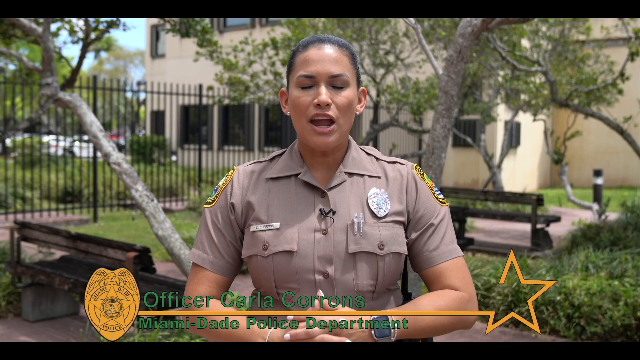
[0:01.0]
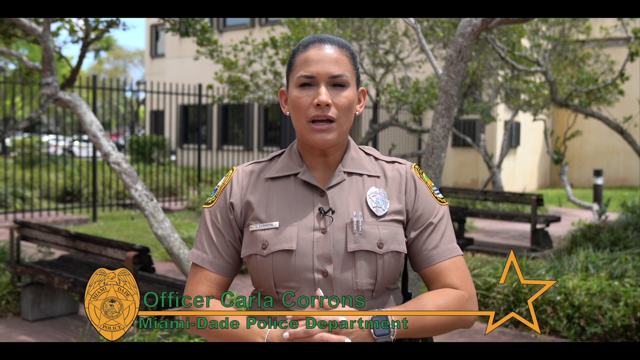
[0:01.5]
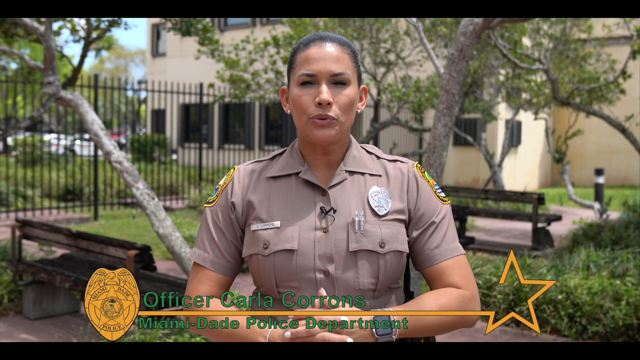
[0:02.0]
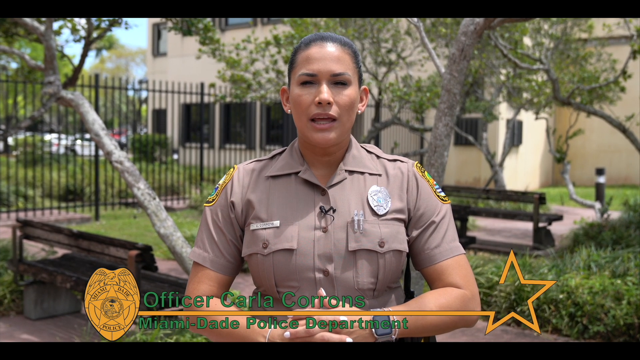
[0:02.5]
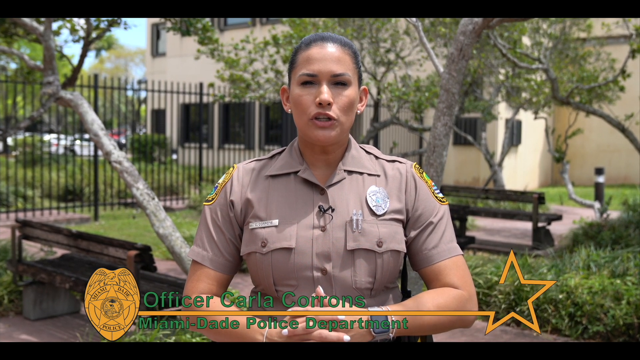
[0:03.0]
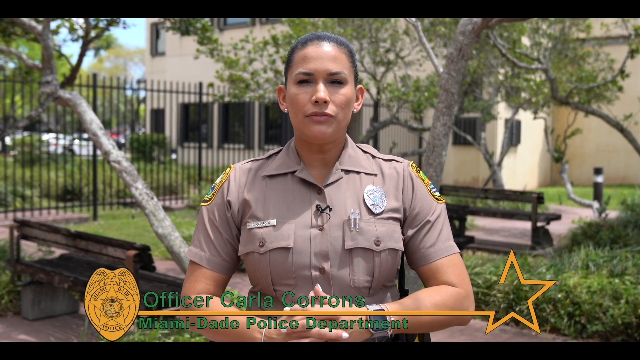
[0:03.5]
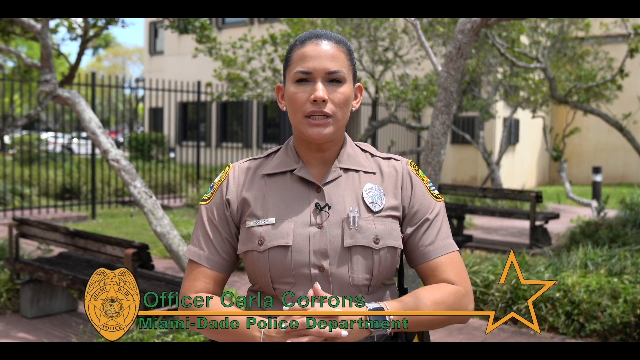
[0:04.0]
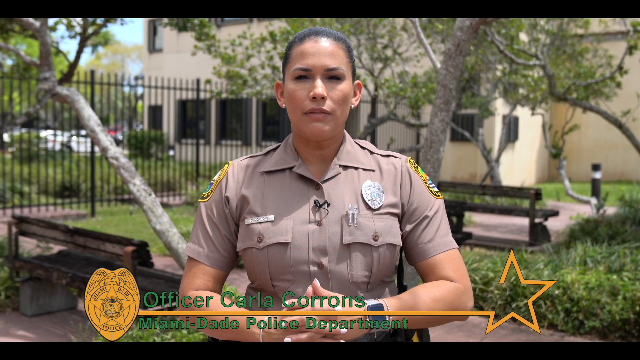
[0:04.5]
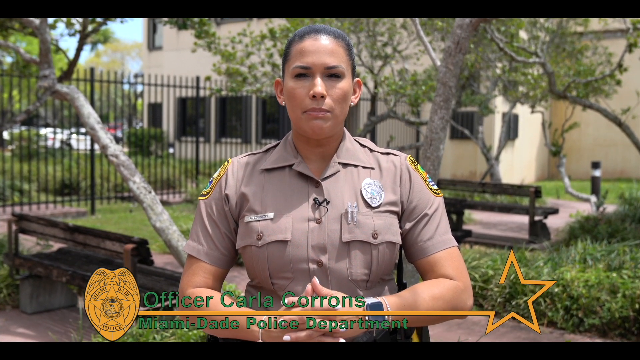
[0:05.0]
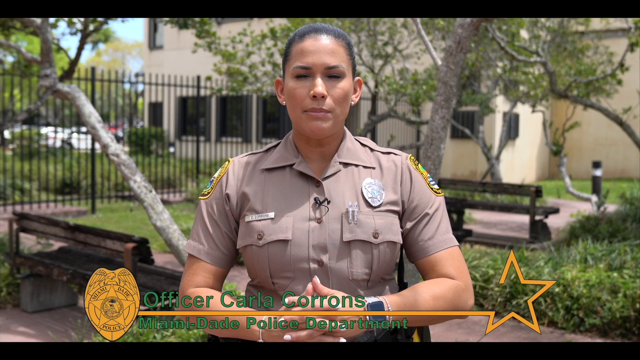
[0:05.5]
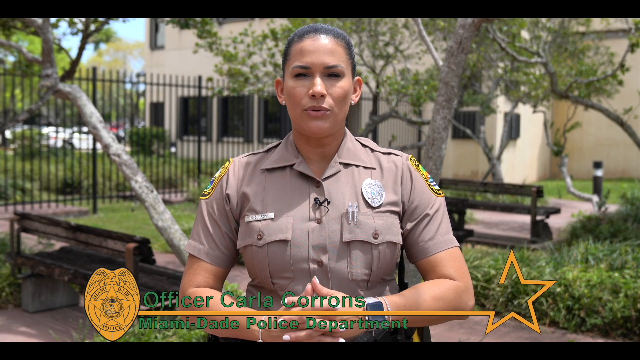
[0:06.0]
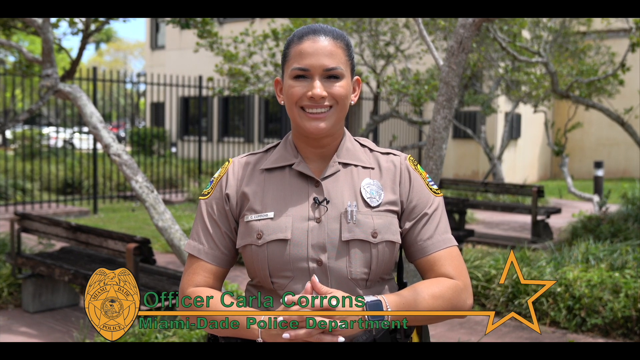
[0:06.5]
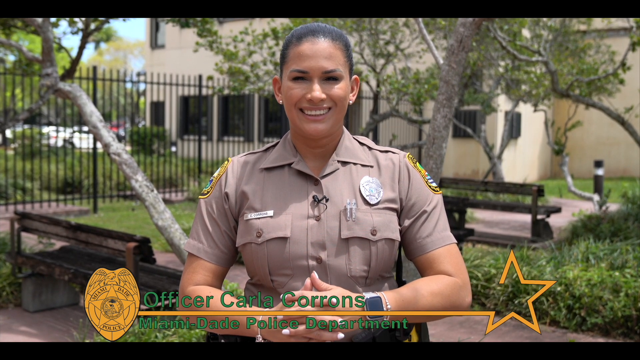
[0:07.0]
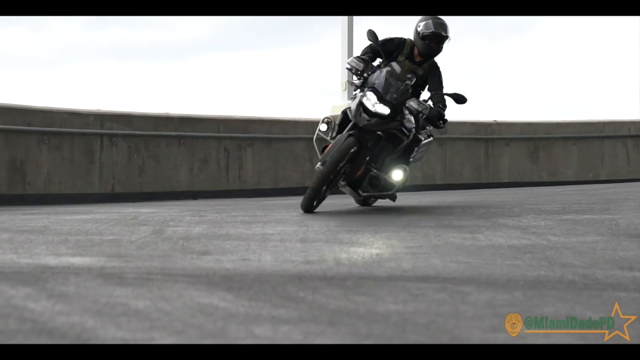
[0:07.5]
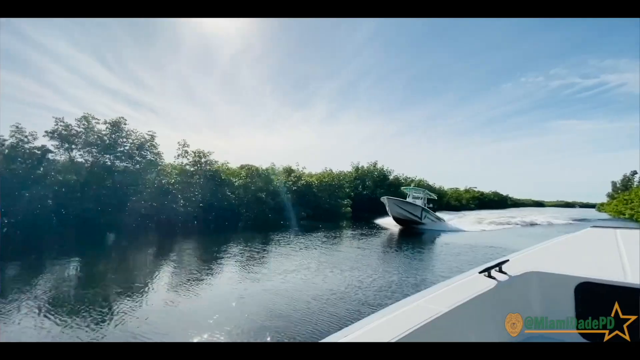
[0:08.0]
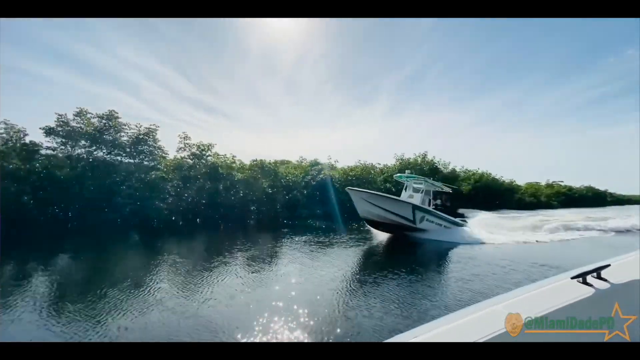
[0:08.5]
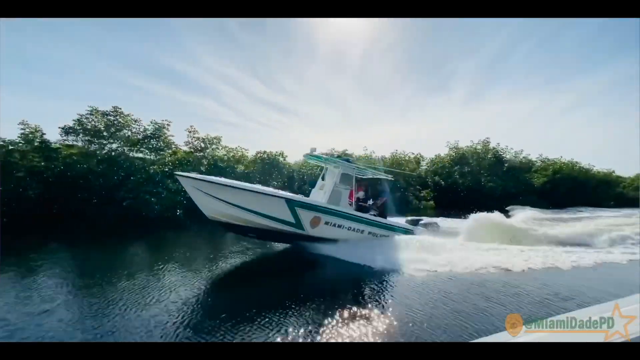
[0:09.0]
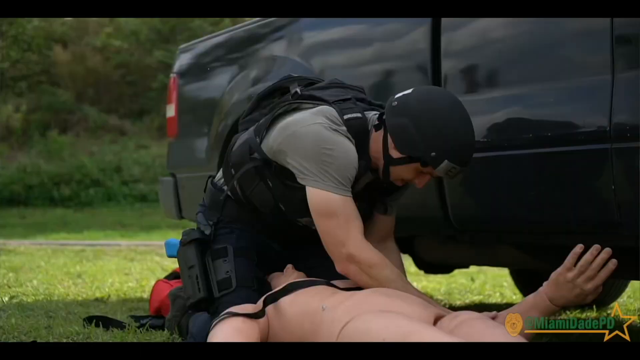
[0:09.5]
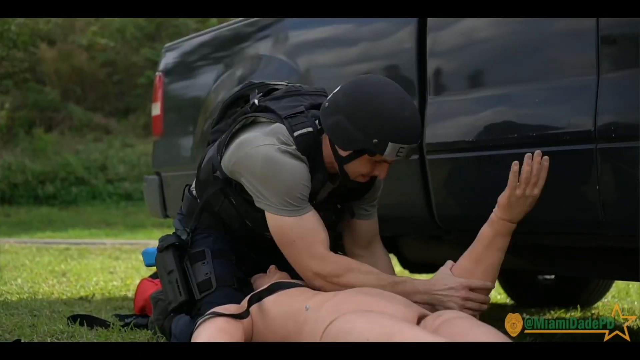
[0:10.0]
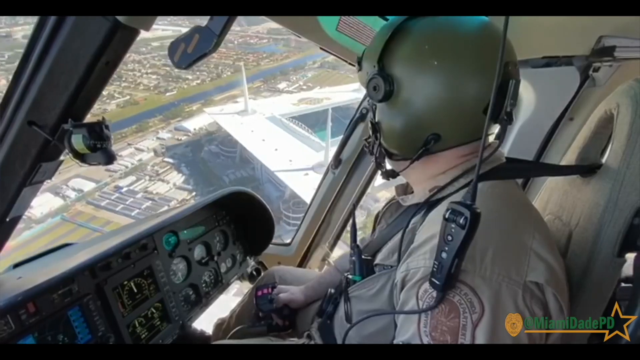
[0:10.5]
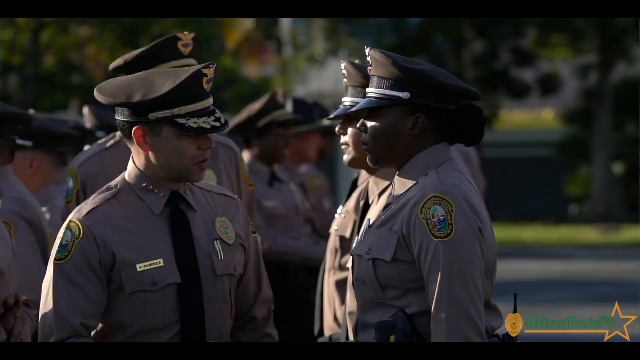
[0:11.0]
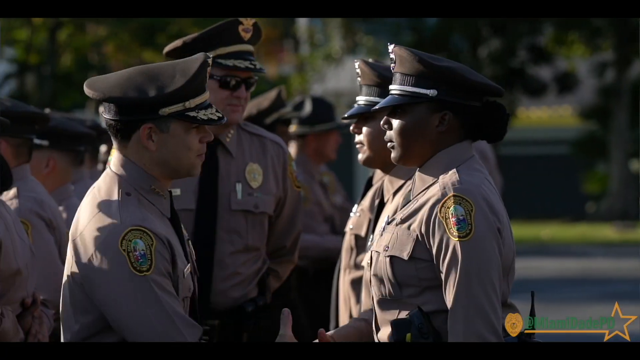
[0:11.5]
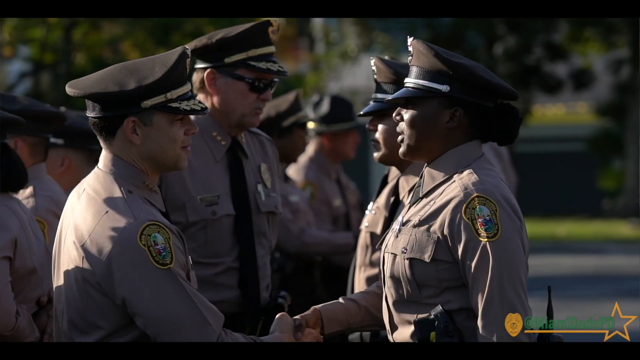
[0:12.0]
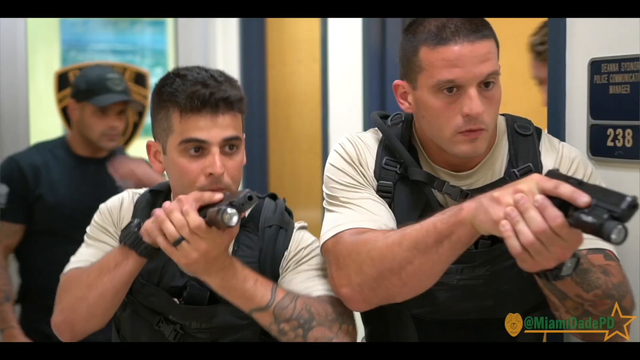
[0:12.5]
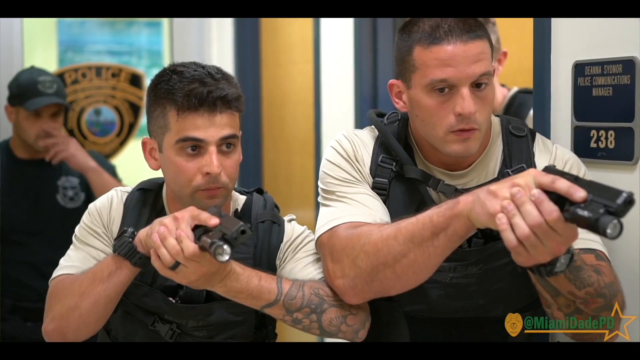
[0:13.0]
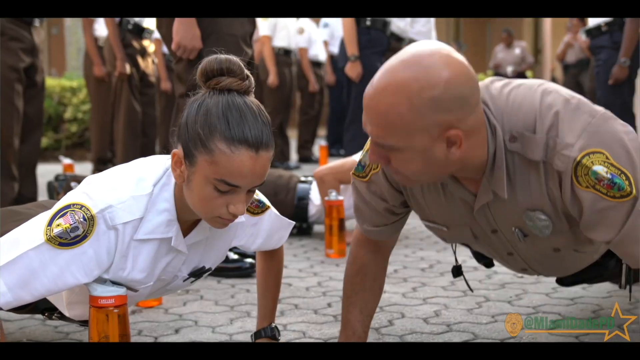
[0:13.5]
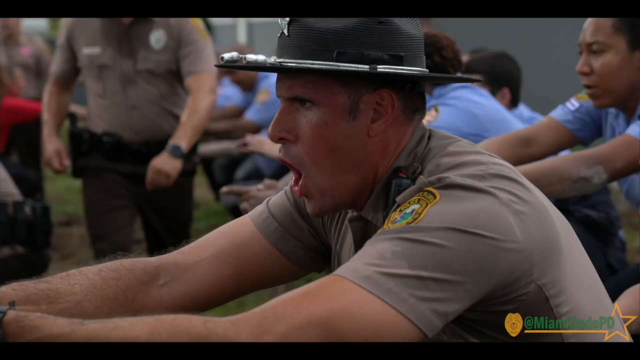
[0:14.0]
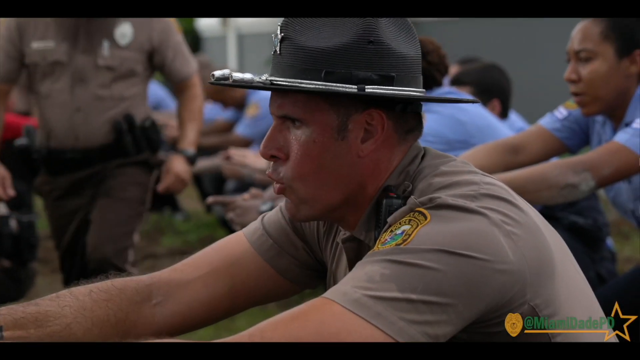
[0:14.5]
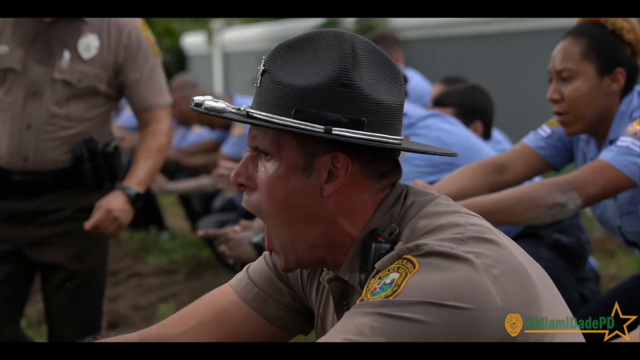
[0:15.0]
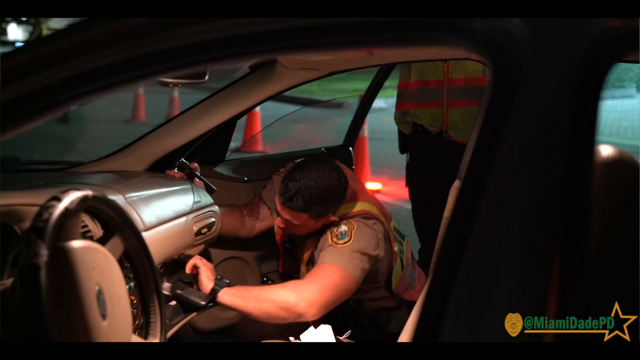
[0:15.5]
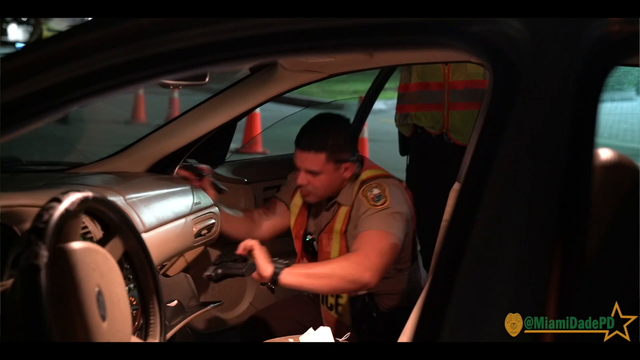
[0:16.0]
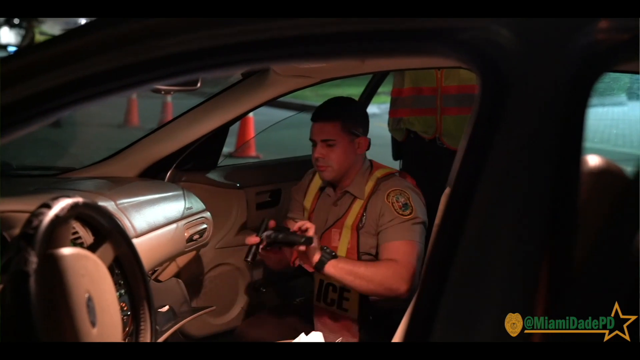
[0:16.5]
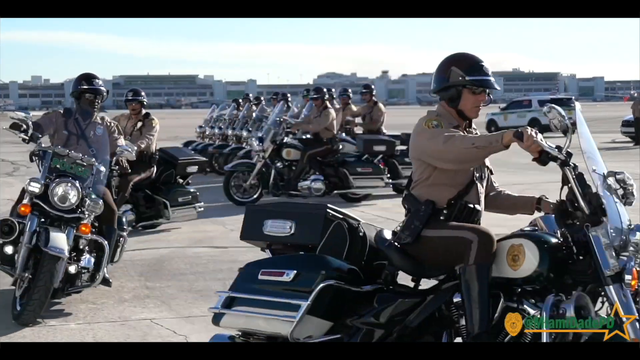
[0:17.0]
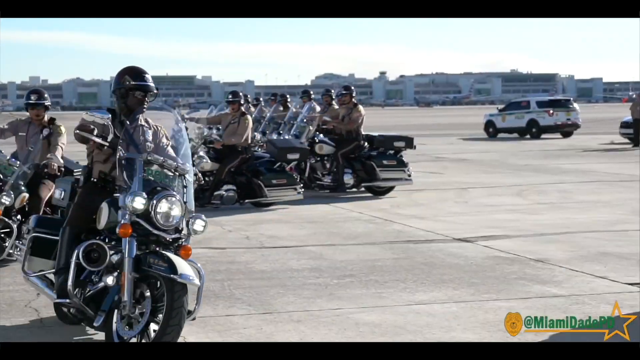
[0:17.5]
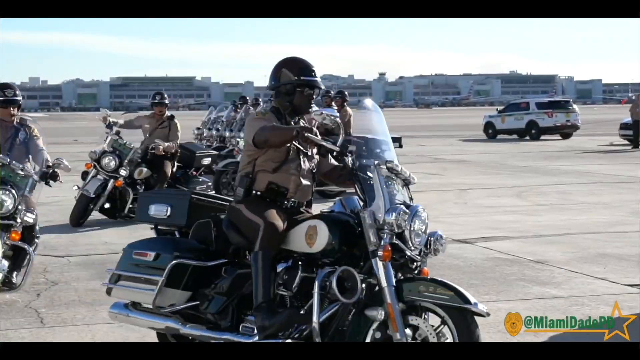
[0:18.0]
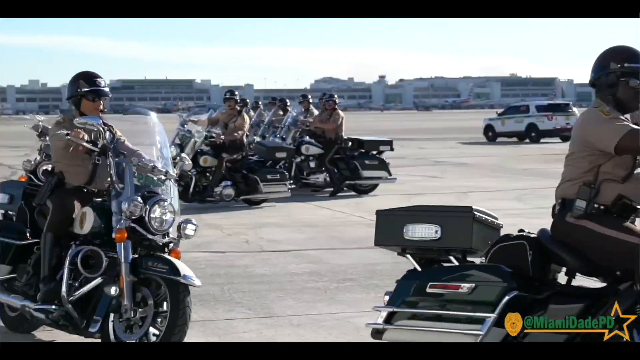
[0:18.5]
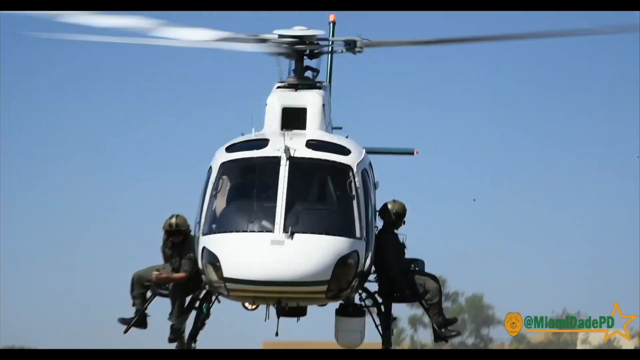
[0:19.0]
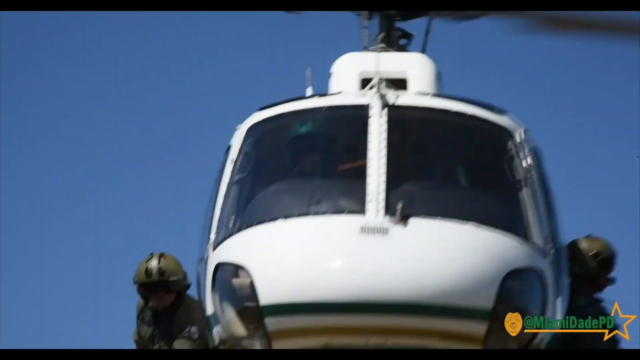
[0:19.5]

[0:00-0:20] The video begins by showing an officer named Officer Carla Corumbs of a police department. A woman and a man are shown. In the next scene, a motorbike is moving and something is moving on the water, which turns out to be a helicopter. A woman is shown training, and men are together with people. The video then moves to another scene showing an area that is restricted and being protected. Another scene shows text reading "seeking homicide information" with a reward increase of up to $15,000, along with Elijah LaFrance, 3 years old. The text states that on Saturday, April 24, 2021, at approximately 8:05 p.m., the victim was killed in the area of Miami Avenue and 158th Street, Miami, Florida, and begins a request for anyone with information.